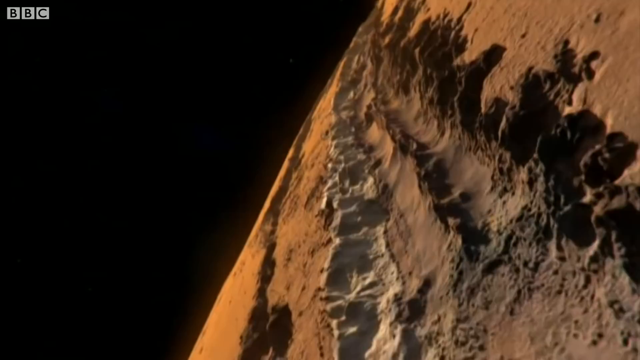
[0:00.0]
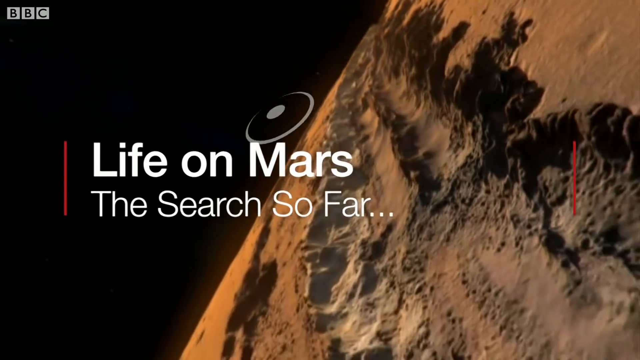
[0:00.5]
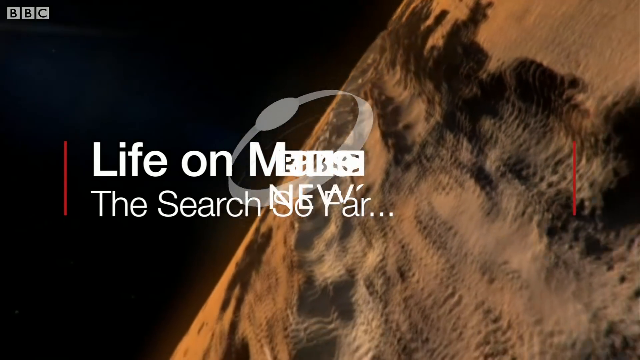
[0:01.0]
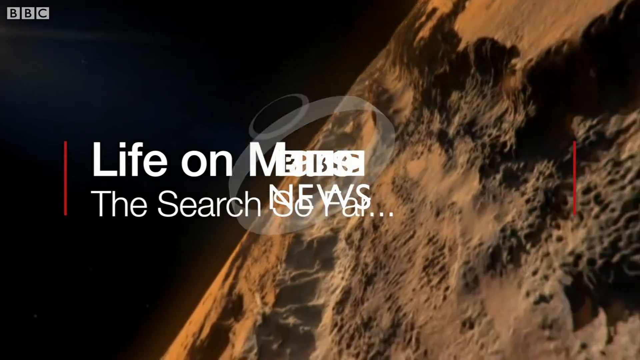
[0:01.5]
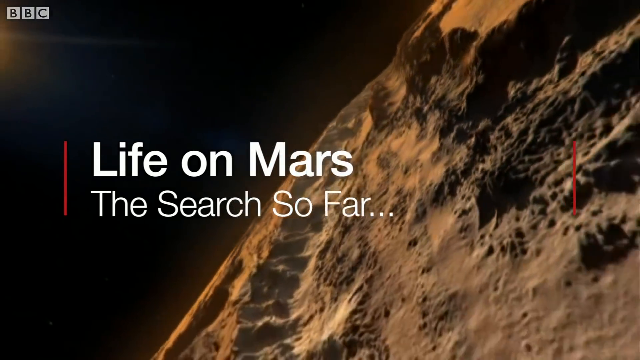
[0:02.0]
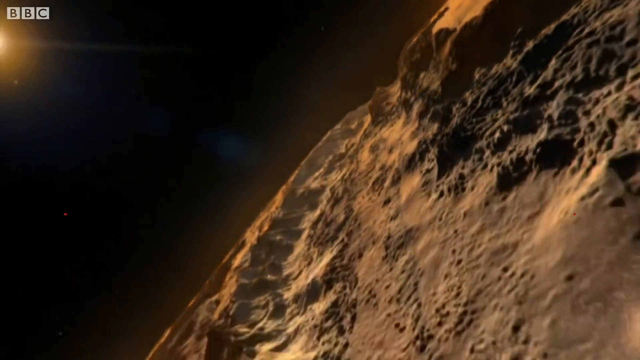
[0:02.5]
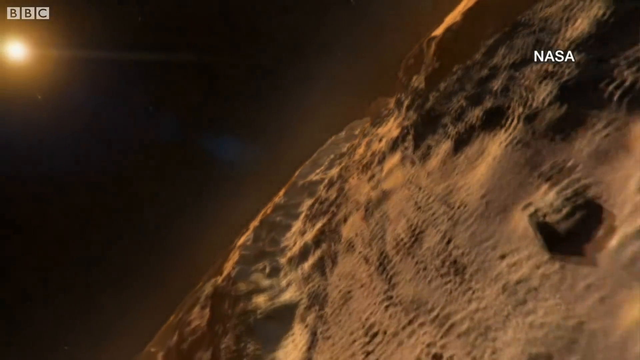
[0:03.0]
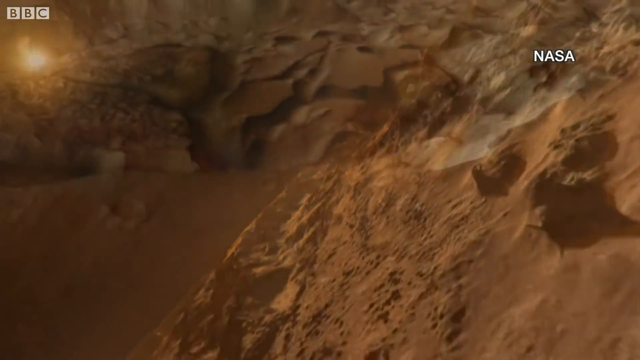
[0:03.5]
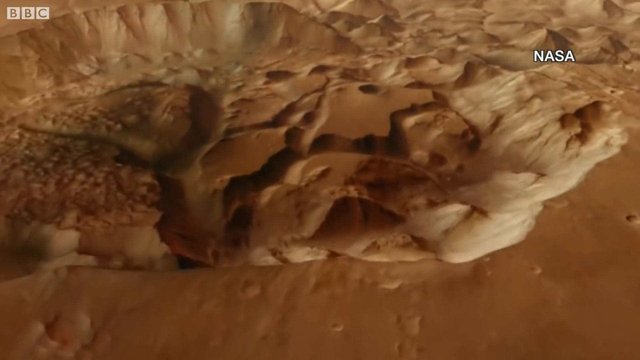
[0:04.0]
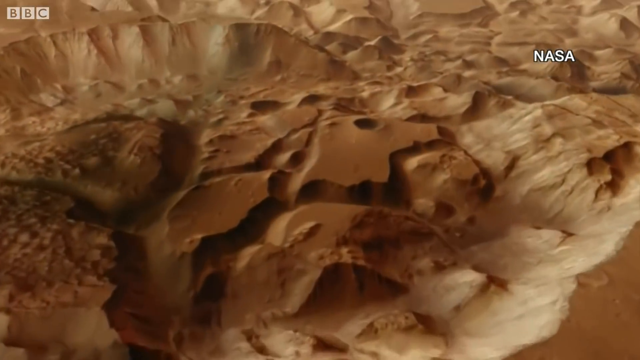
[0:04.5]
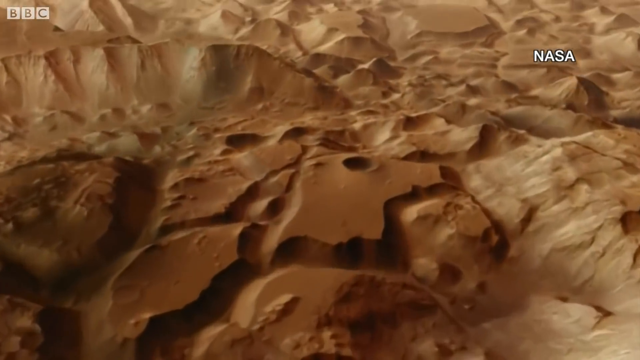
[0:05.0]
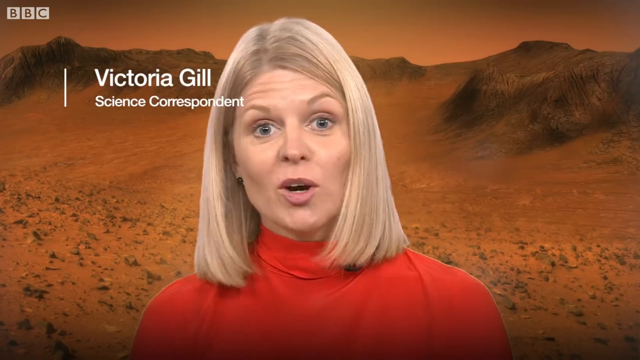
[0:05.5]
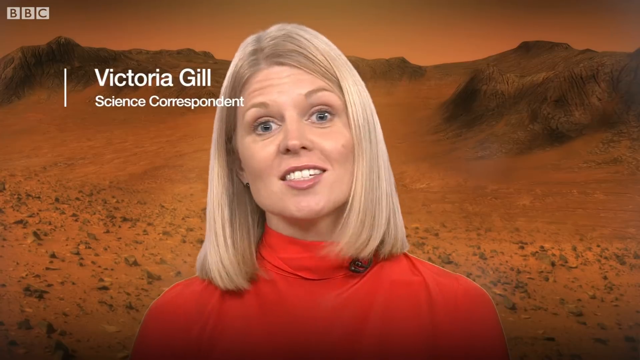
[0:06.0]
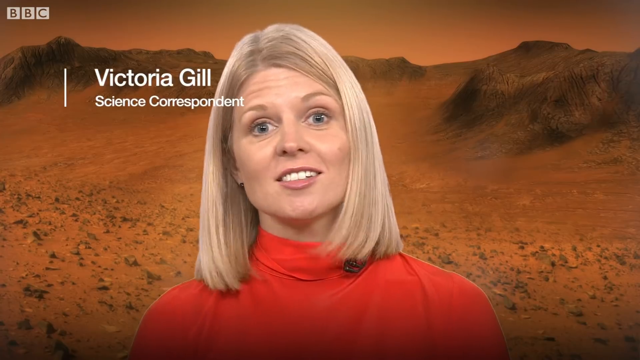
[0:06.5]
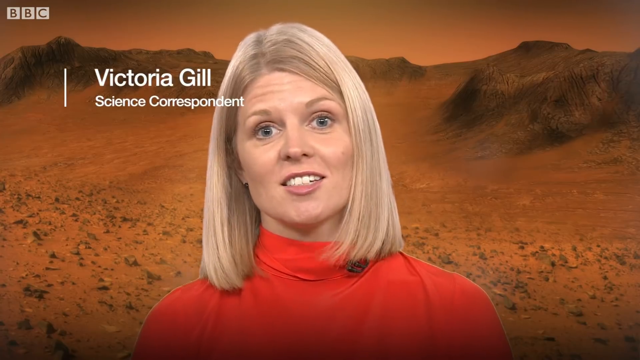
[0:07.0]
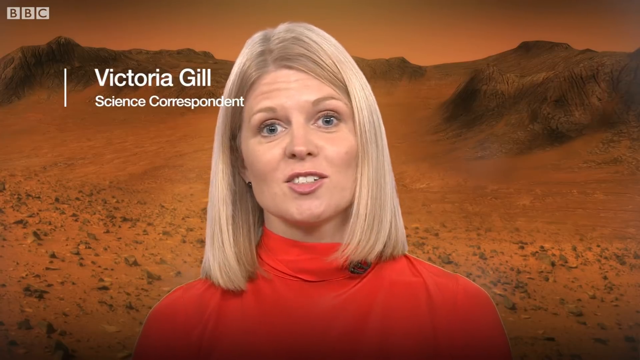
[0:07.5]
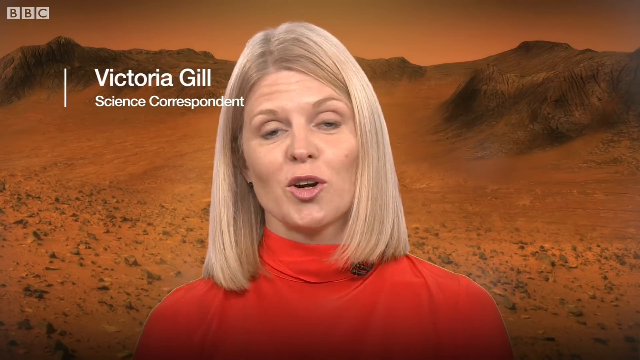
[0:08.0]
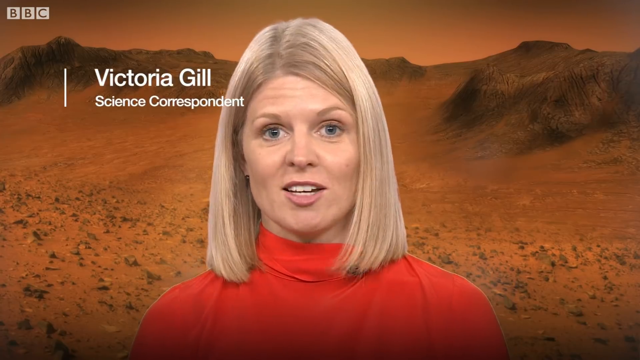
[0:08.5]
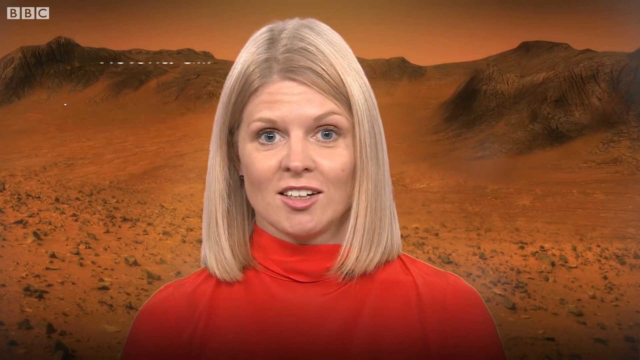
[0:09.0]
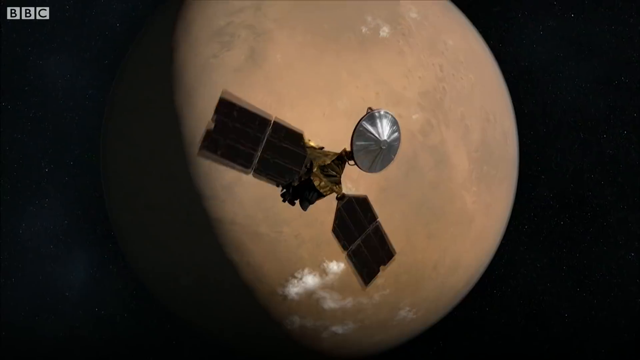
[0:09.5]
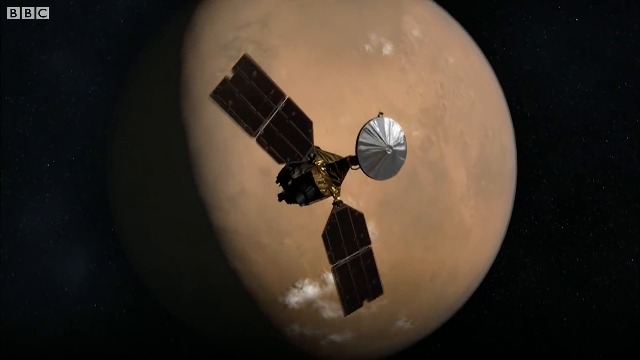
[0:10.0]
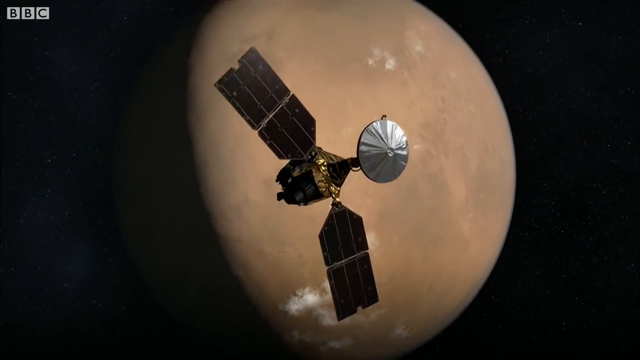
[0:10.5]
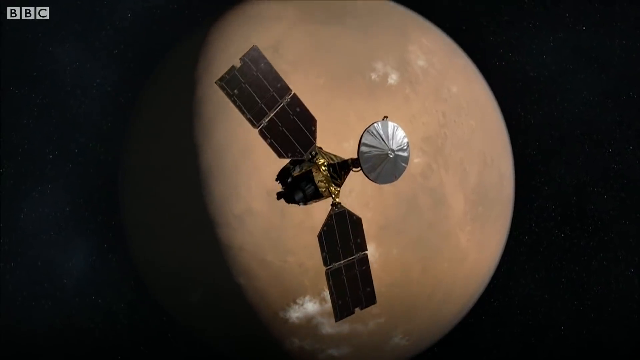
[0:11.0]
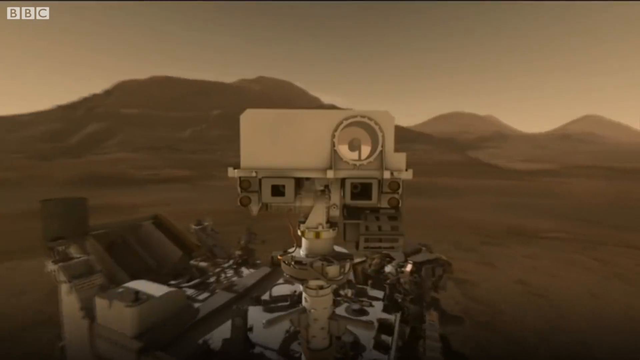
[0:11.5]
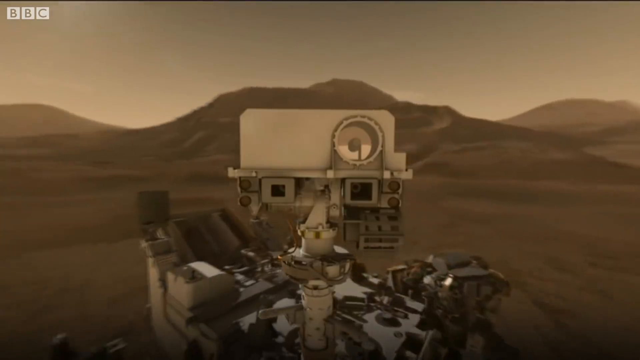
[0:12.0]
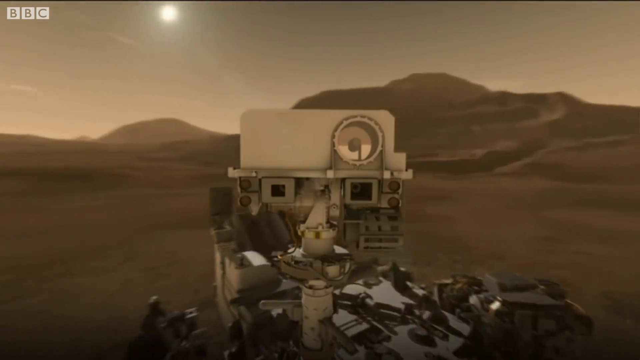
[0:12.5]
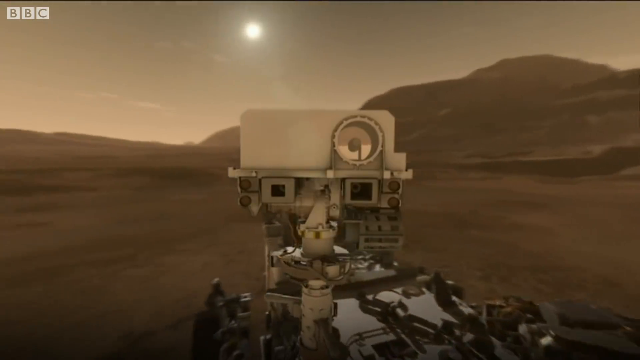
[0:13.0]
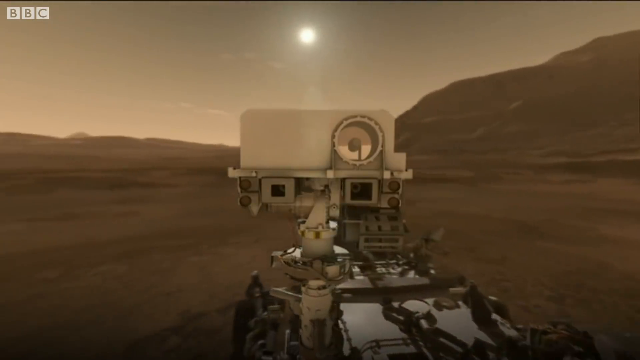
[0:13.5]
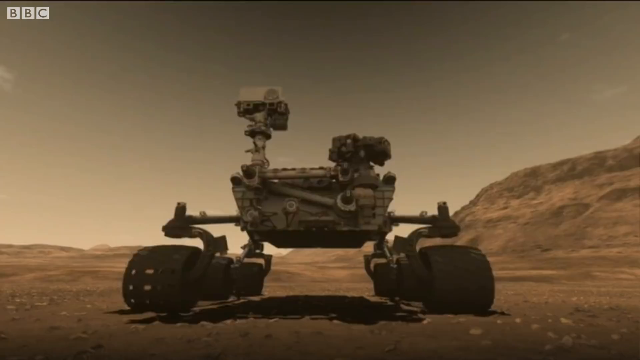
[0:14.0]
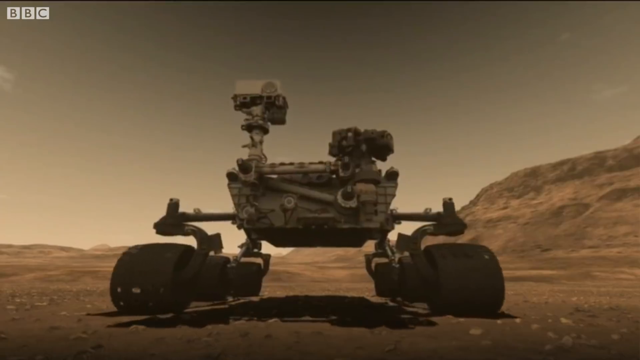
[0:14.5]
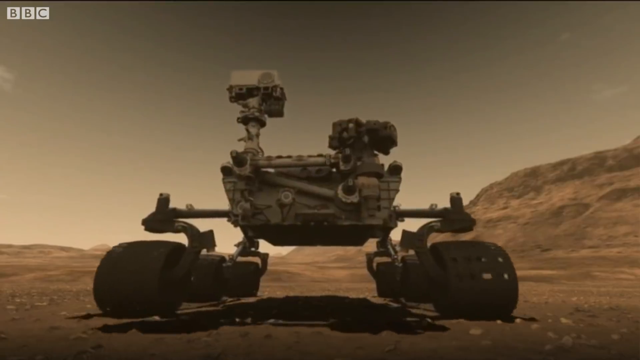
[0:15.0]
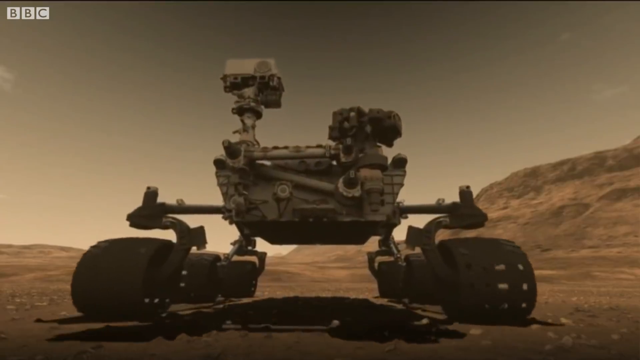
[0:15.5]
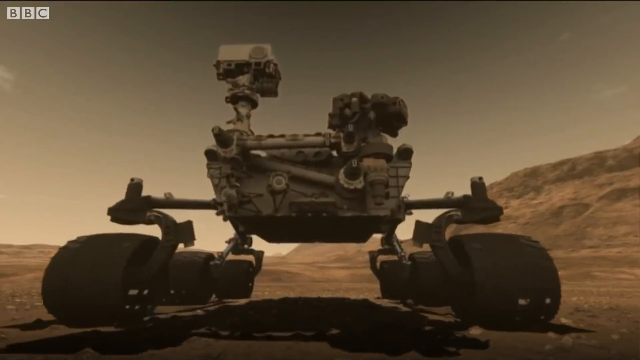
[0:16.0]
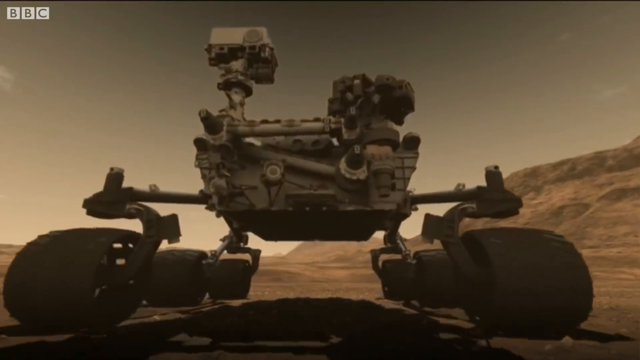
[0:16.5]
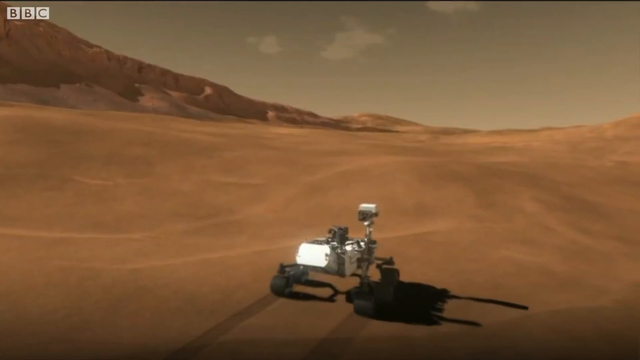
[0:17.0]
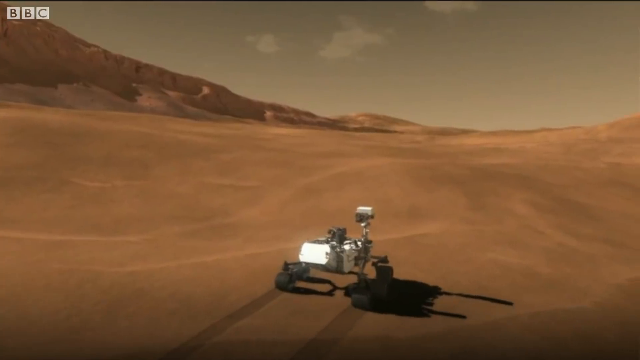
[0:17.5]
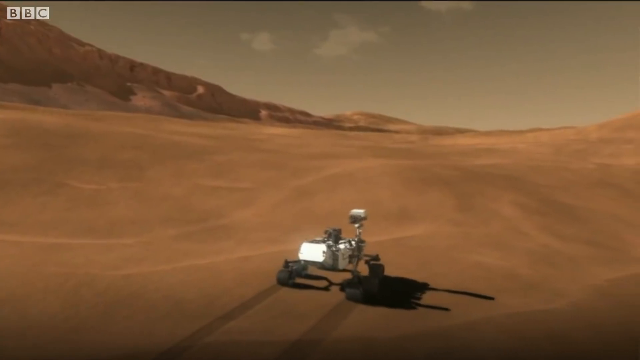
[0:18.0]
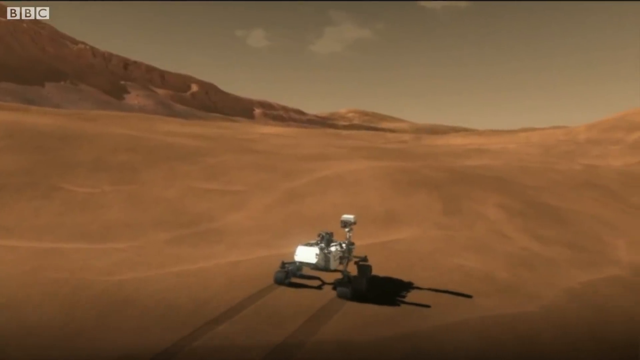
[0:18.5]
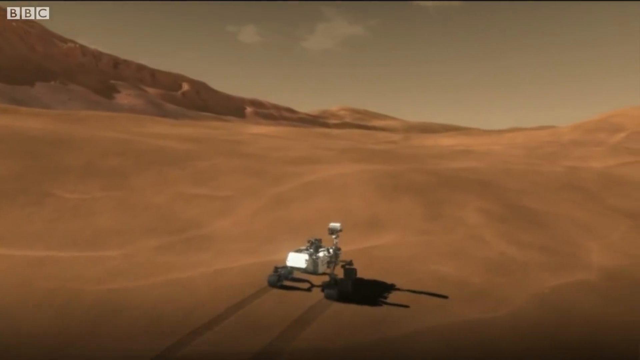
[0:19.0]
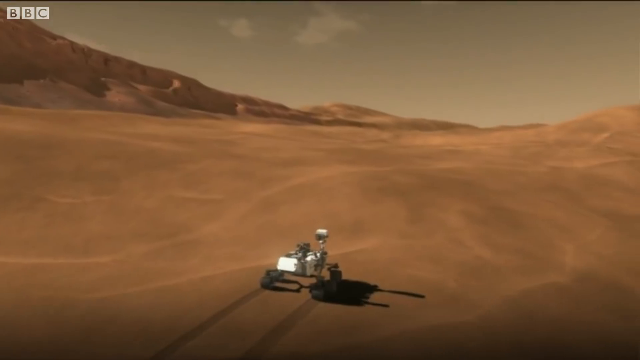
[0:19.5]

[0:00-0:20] A BBC news screen shows the logo at the top left, and the text "Life on Mars and the search so far" appears on the screen. A white woman with white hair, dressed in a white top, talks and explains something about the news. Behind her is a desert-like setting with a setting sun. The woman is Victoria Gill, the science correspondent. After a few seconds of talking, a NASA object appears in space, rotating. Right after it, a huge robotic-like machine with wheels is seen moving and rotating in the desert. A light comes from the sky and focuses directly on the robotic machine, which keeps moving across the desert.